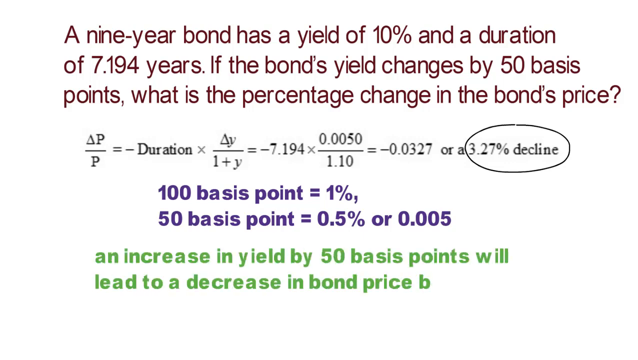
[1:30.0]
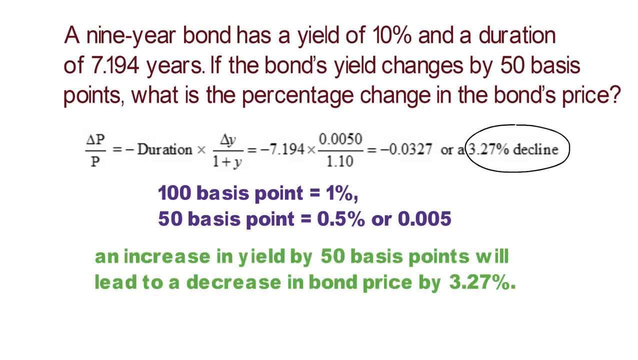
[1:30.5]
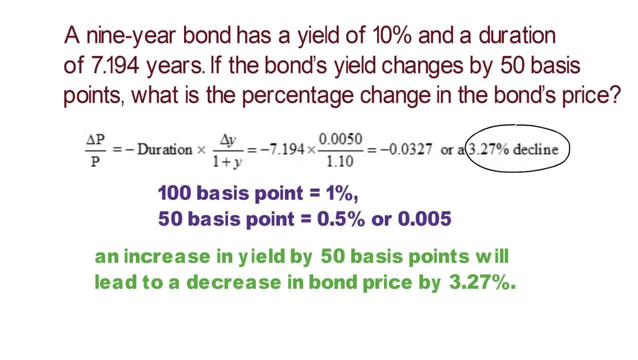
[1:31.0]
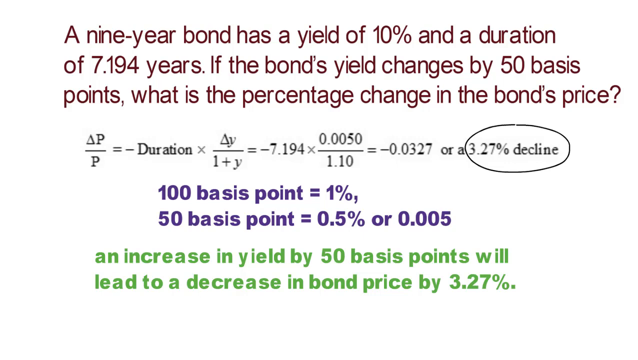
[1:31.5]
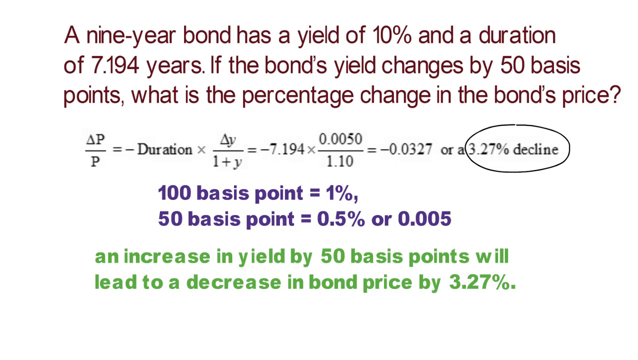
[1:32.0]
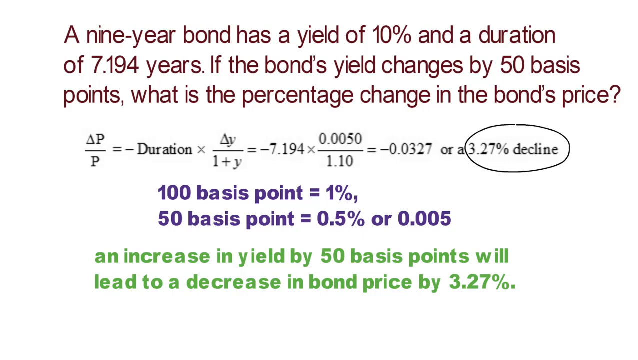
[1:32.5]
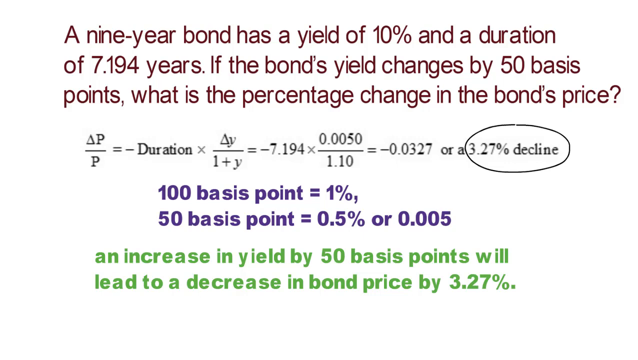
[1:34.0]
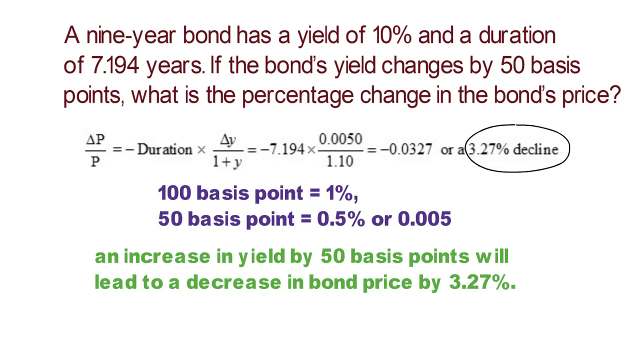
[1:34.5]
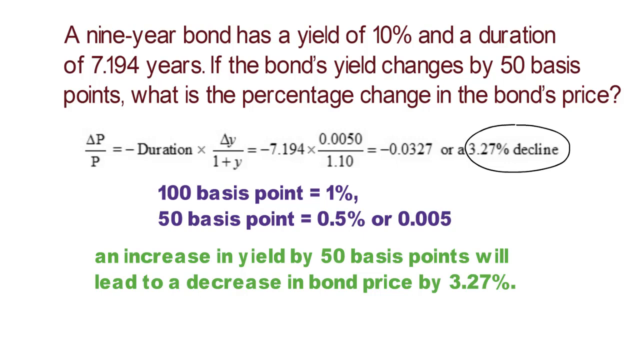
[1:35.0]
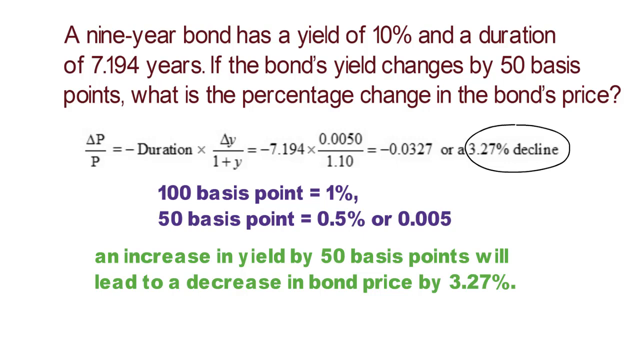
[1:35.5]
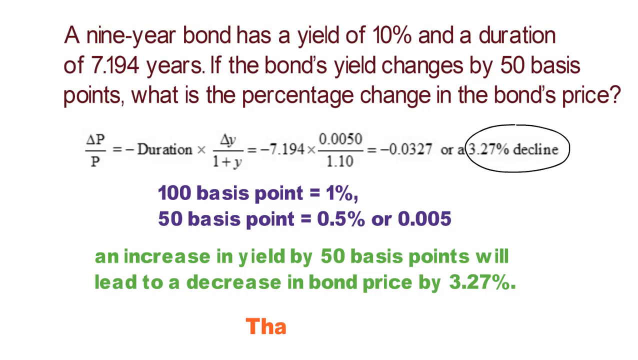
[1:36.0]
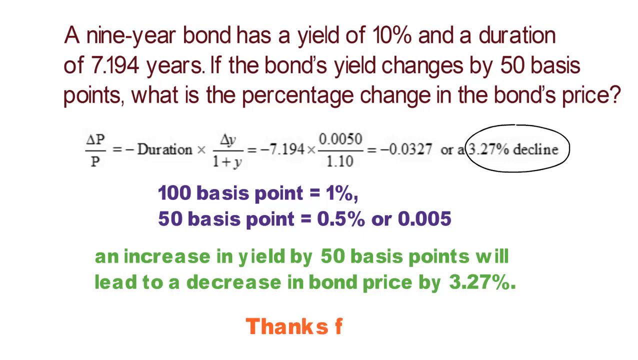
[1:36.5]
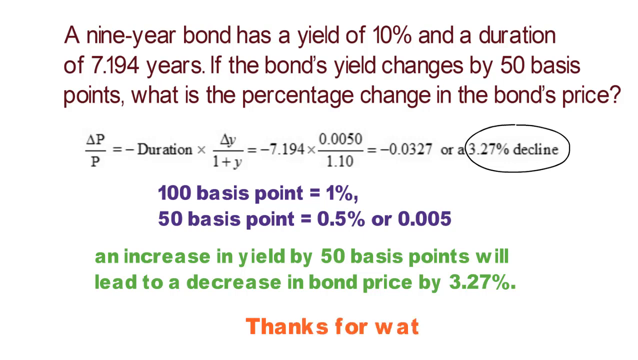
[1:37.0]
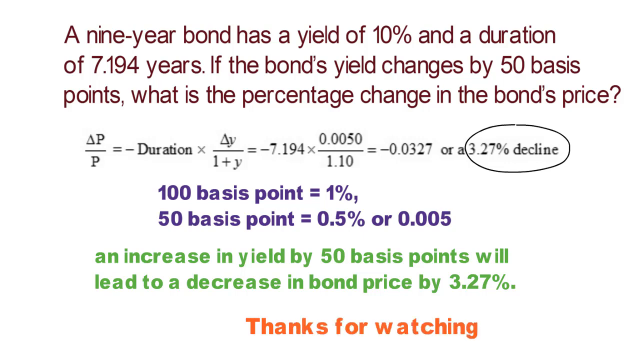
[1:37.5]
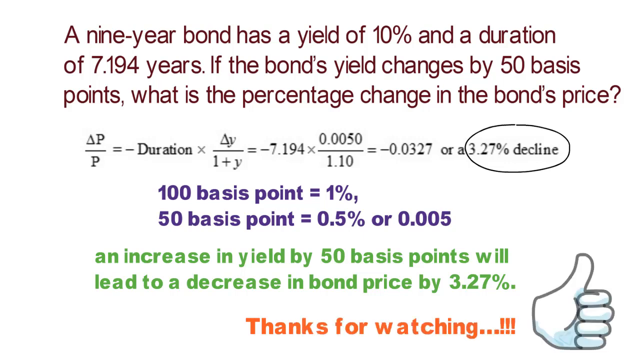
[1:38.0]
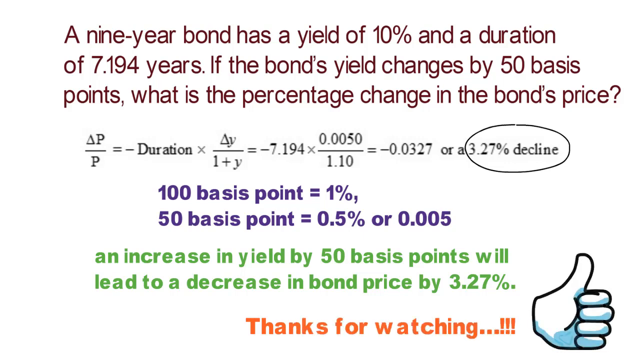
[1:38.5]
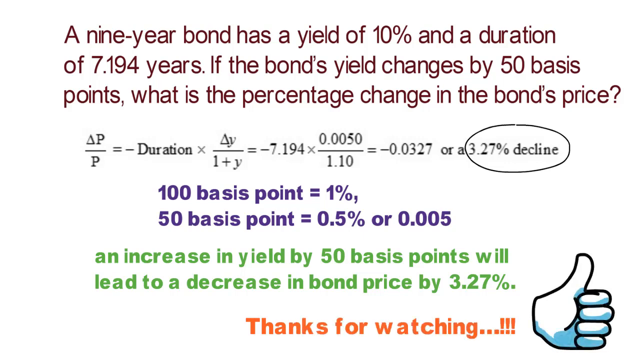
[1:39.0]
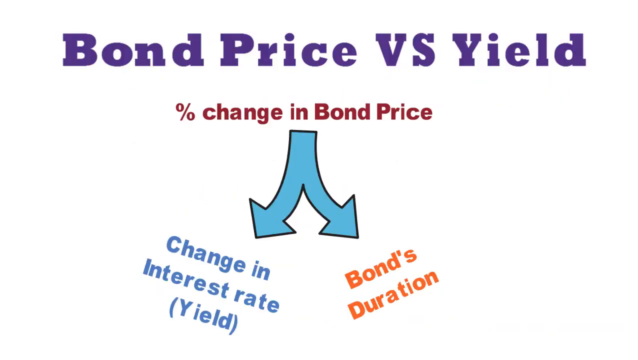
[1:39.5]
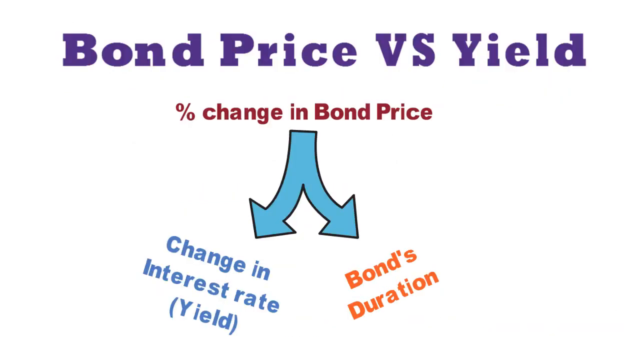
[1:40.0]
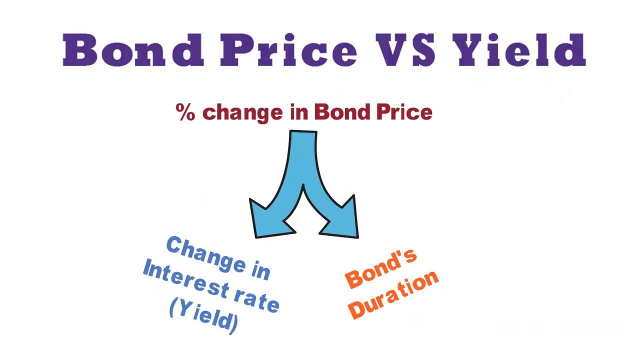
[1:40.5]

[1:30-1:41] The text now reads "an increase in yield by 50 basis points will lead to a decrease in bond prices by 3.27%". In the bottom right, orange "thanks for watching" text appears with three dots and three exclamation points, along with a sort of logo of an animated thumbs-up icon. The video then transitions back to the starting screen, showing "bond prices versus yield" in purple text, "percent change in bond prices" in red text, and a two-way blue arrow pointing left and right: to the left it points to blue text reading "change in interest rate yield", and to the right it points to the text "bond duration". No people or animals appear.